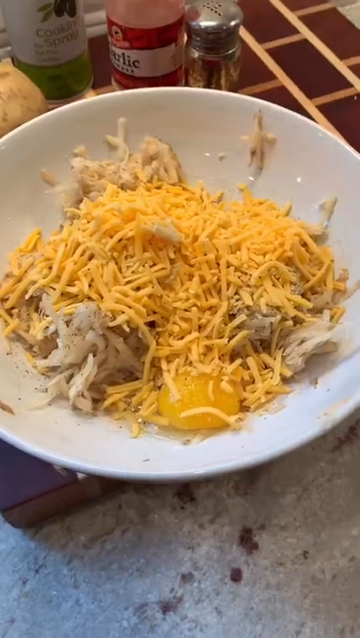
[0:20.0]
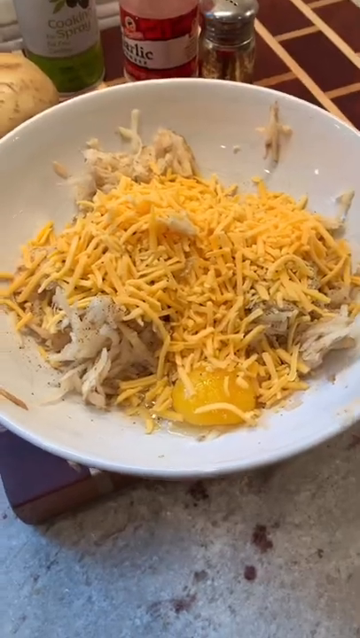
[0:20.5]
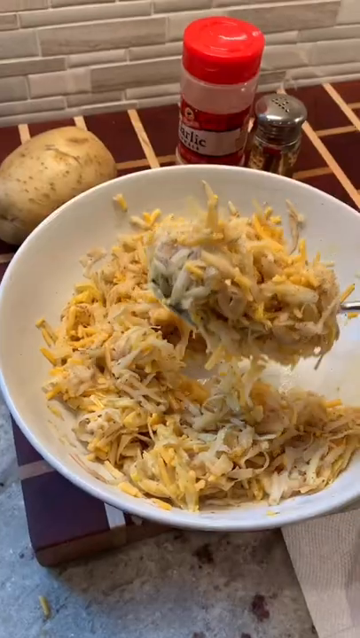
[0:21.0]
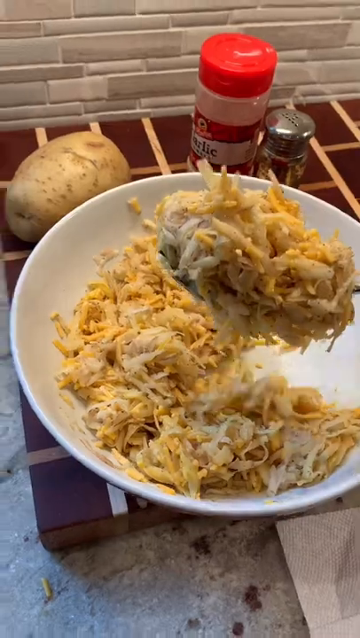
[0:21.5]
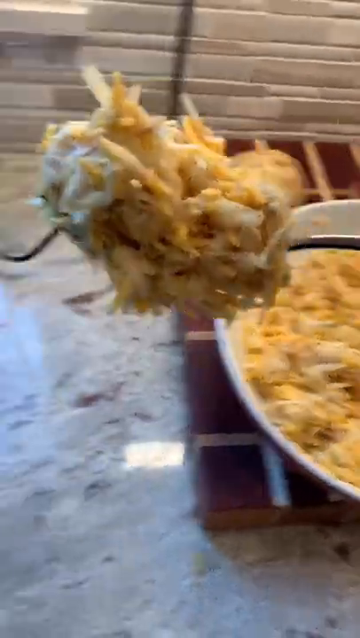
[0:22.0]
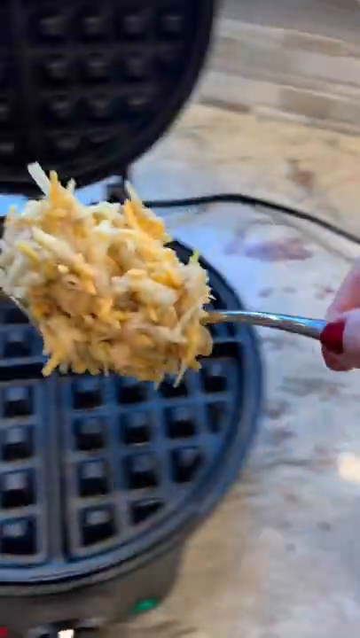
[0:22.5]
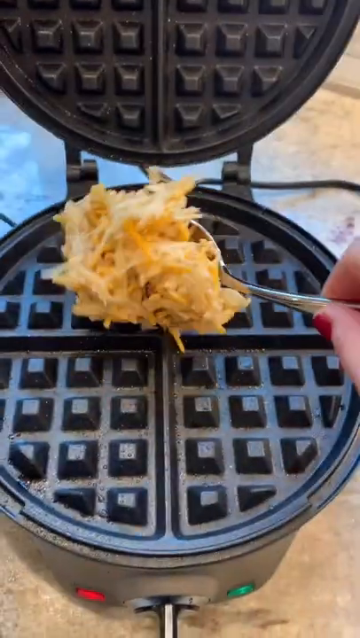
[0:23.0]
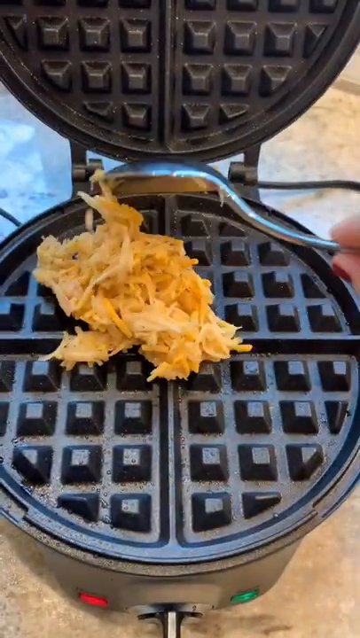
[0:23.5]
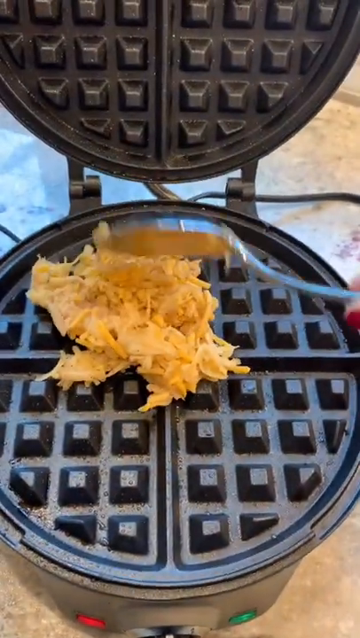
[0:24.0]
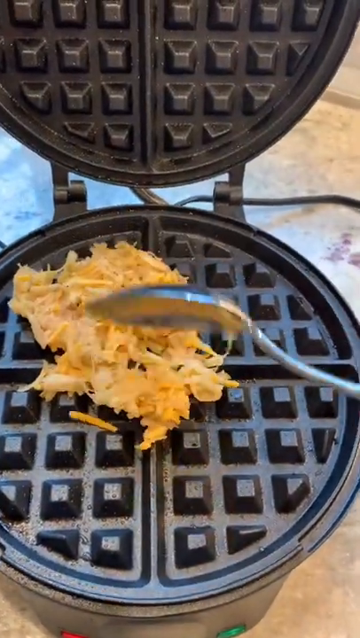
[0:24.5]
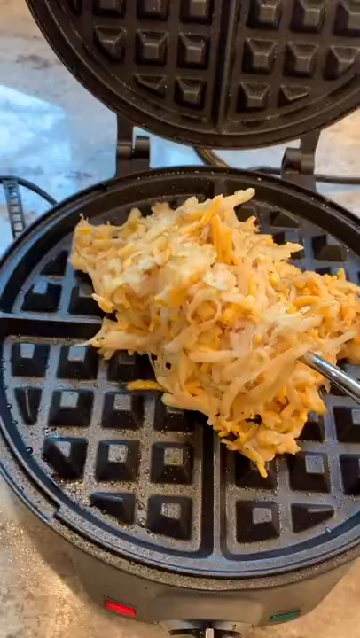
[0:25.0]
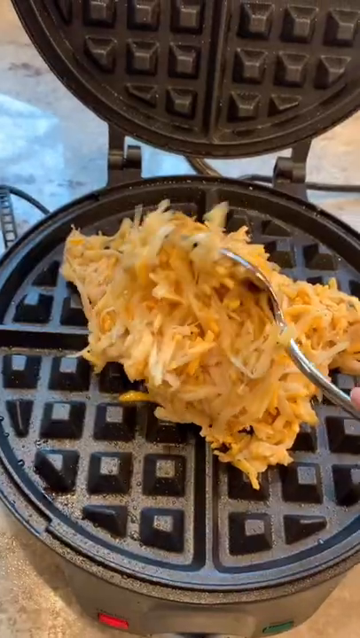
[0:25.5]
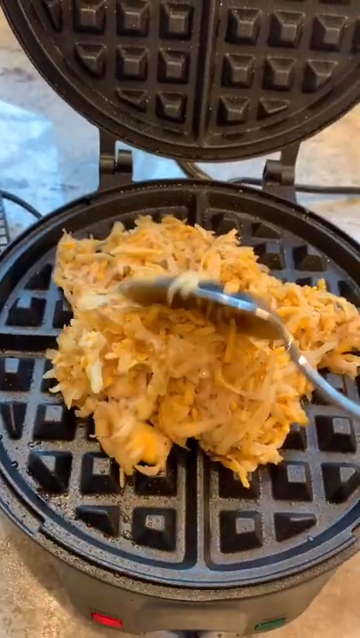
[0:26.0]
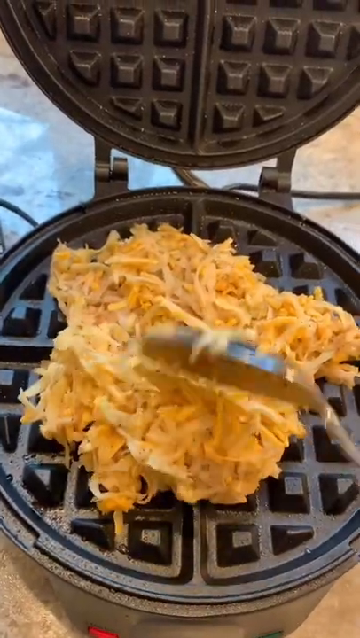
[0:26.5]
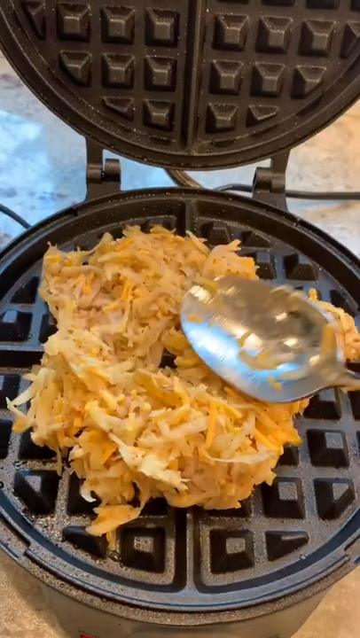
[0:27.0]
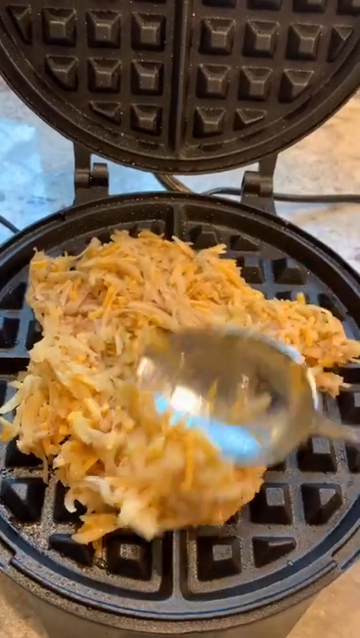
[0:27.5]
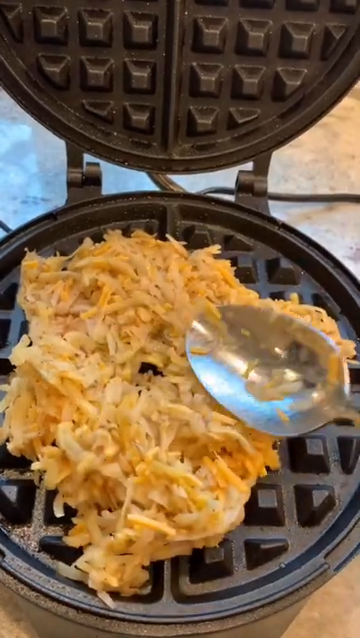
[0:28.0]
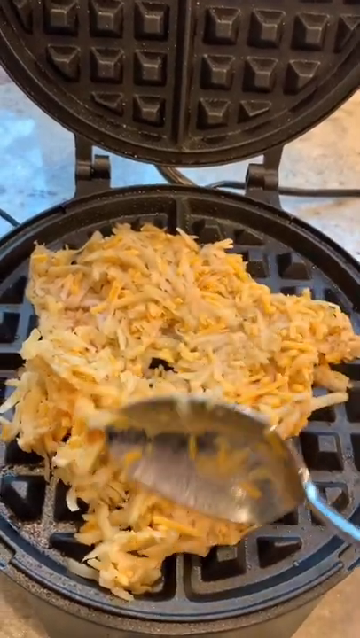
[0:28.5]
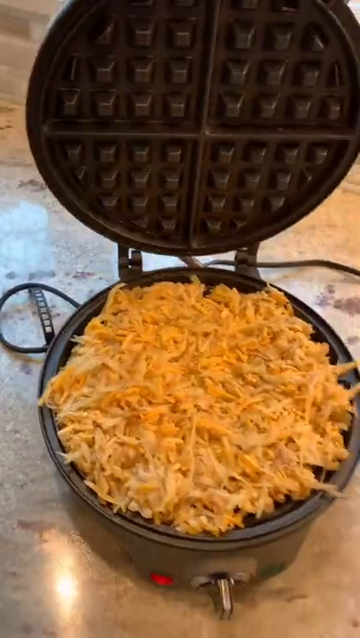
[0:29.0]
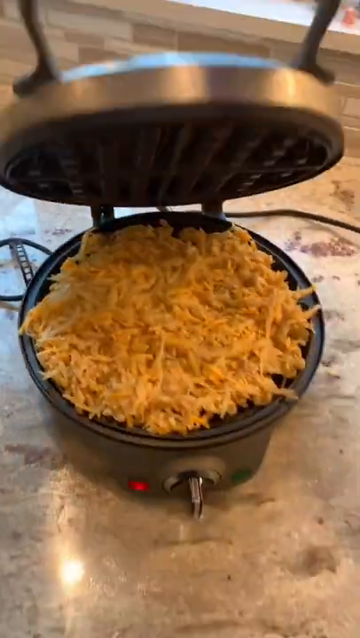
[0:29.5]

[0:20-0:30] The cheese, grated potato and egg are all put into one bowl and mixed together. Some garlic and some oil are also added. The mixture is then put into the waffle machine to cook and take on the waffle design.